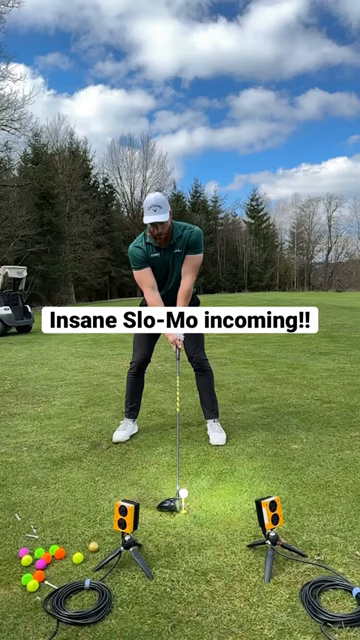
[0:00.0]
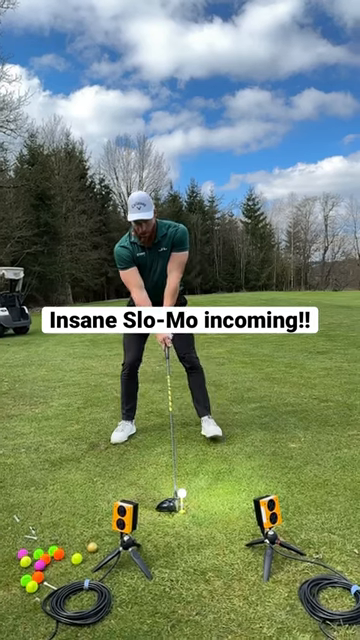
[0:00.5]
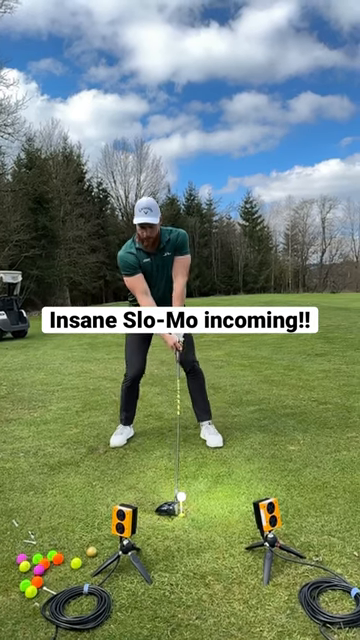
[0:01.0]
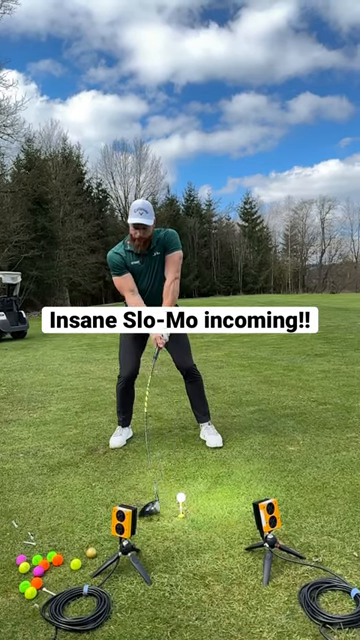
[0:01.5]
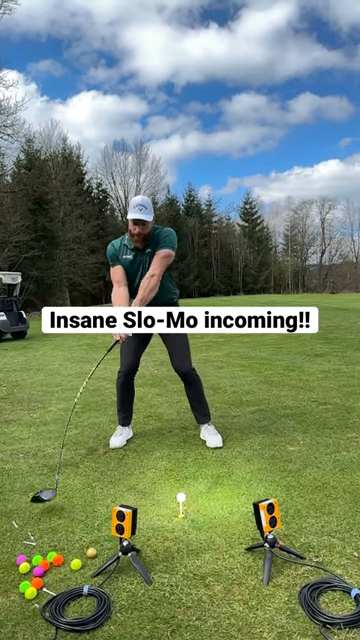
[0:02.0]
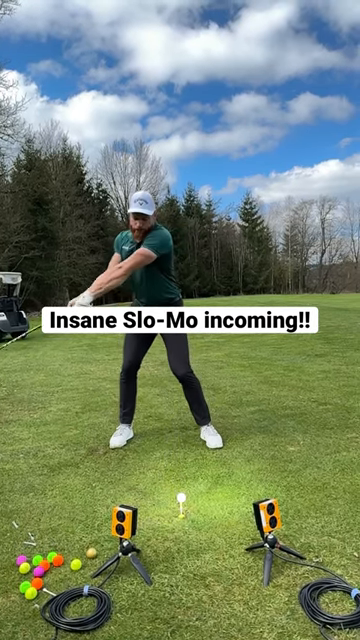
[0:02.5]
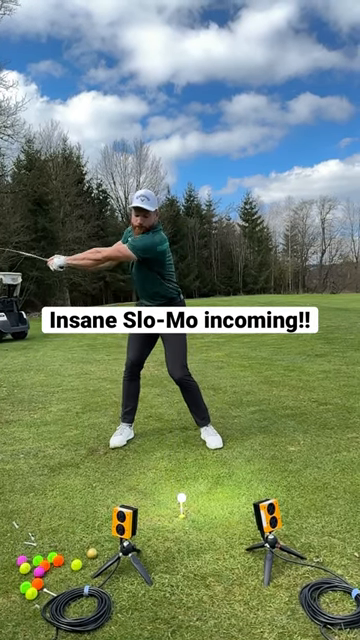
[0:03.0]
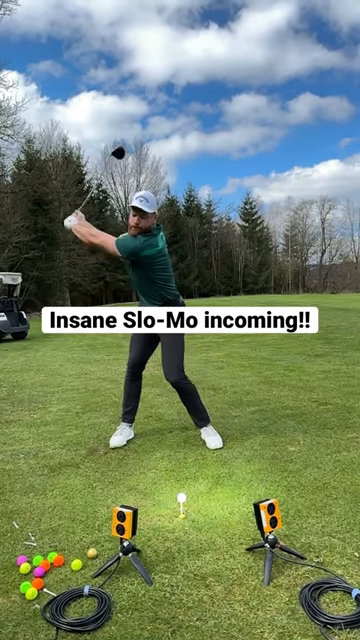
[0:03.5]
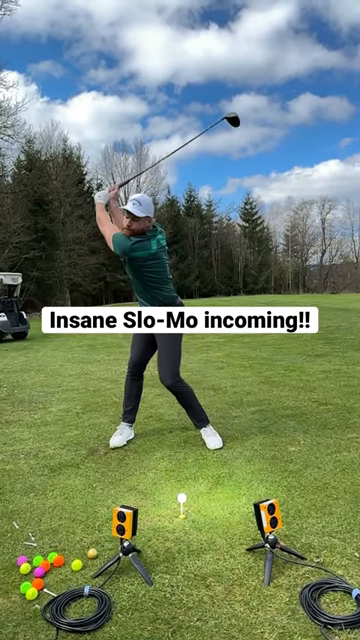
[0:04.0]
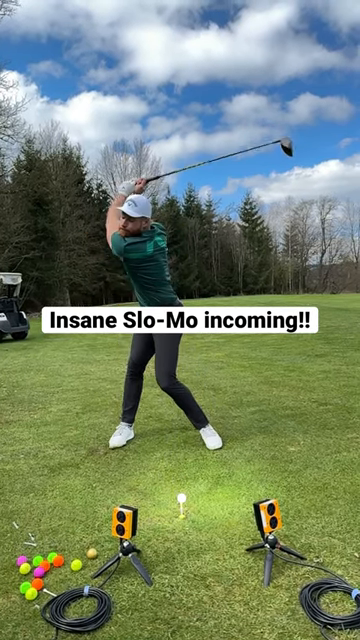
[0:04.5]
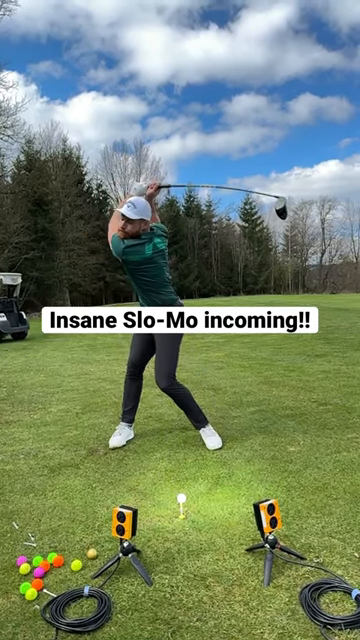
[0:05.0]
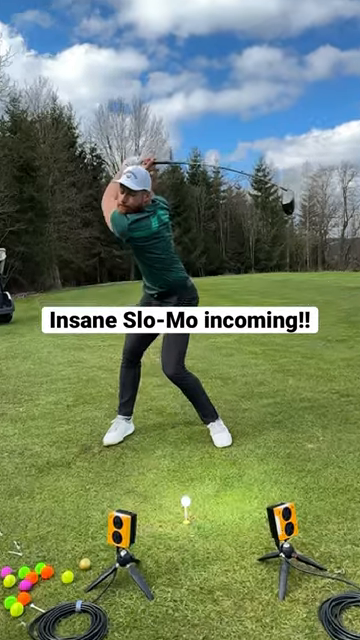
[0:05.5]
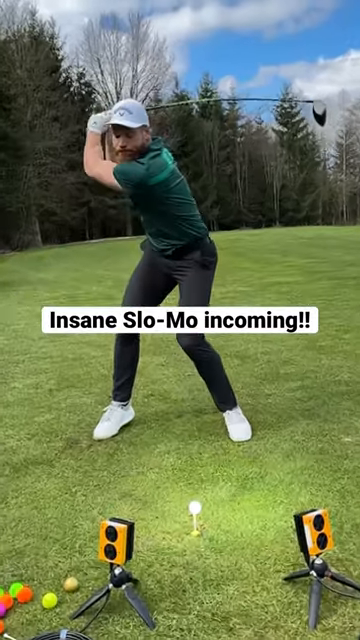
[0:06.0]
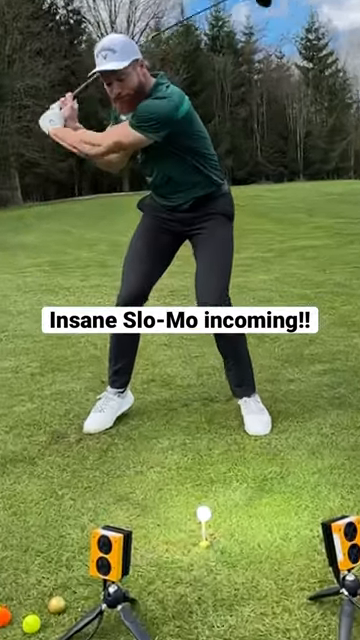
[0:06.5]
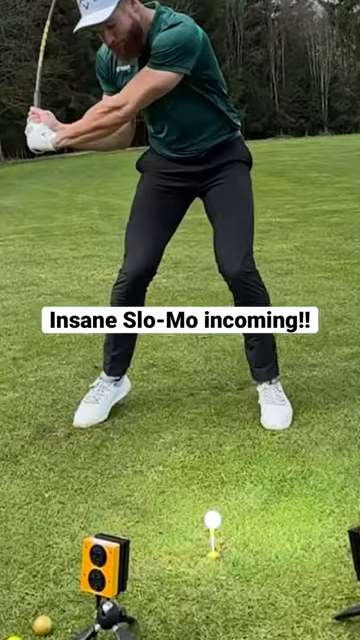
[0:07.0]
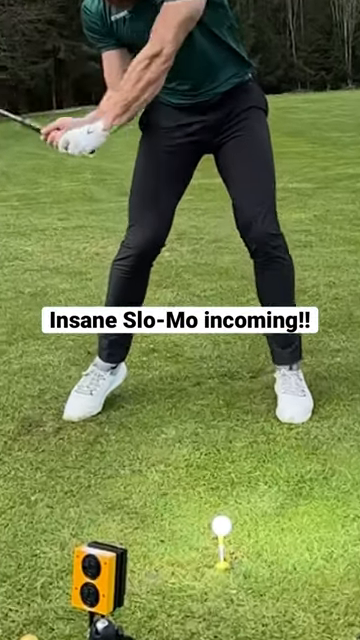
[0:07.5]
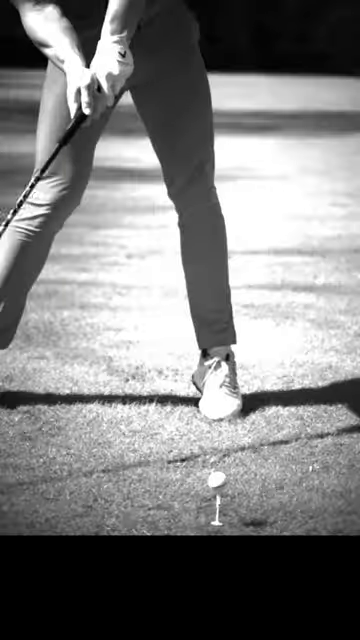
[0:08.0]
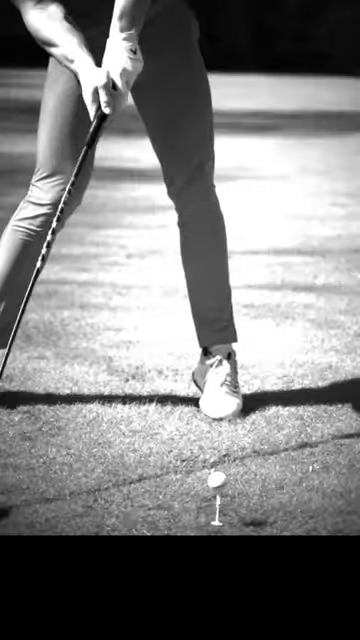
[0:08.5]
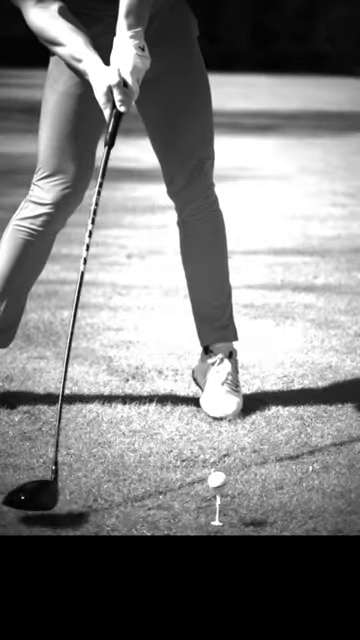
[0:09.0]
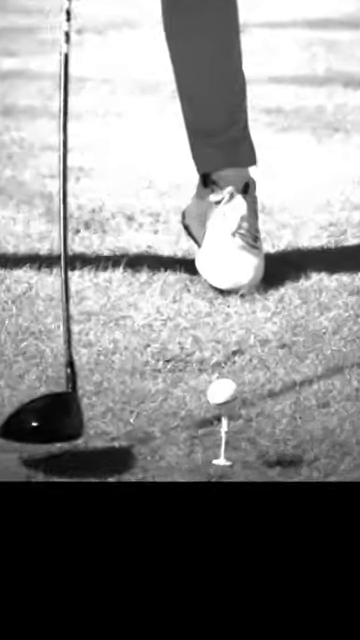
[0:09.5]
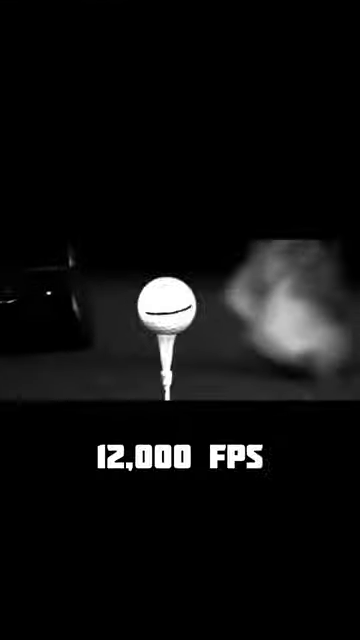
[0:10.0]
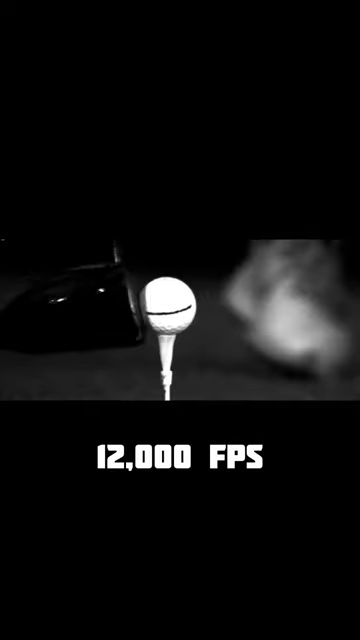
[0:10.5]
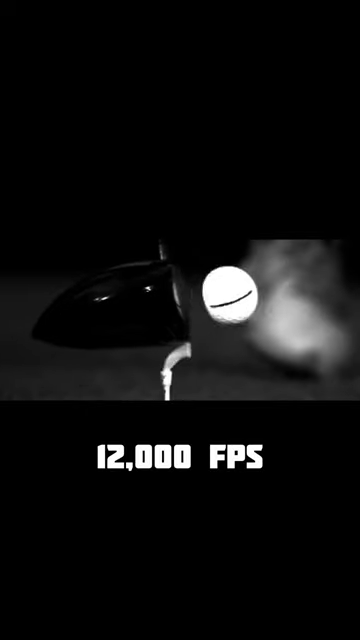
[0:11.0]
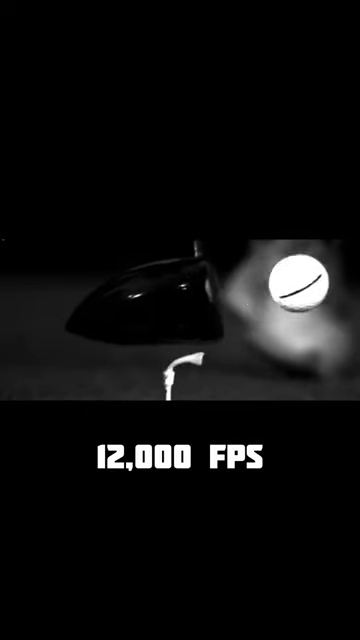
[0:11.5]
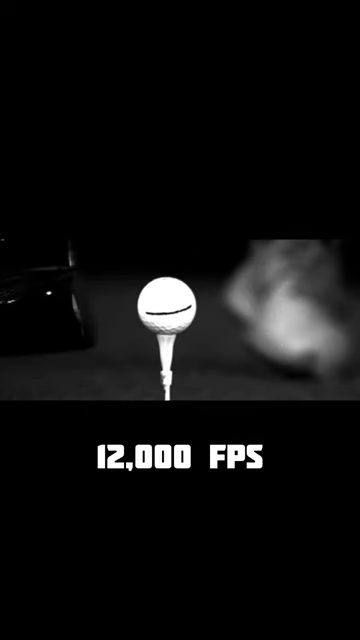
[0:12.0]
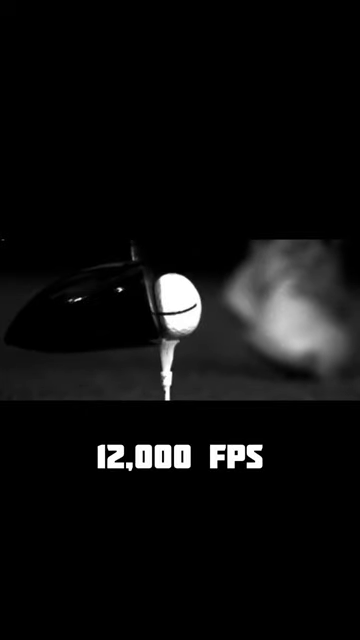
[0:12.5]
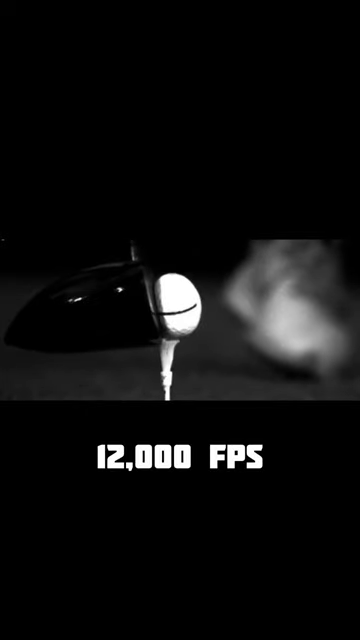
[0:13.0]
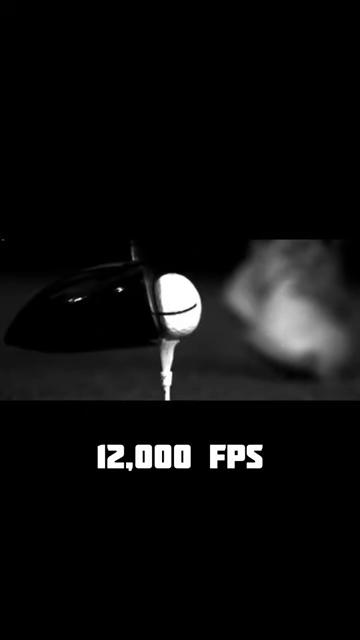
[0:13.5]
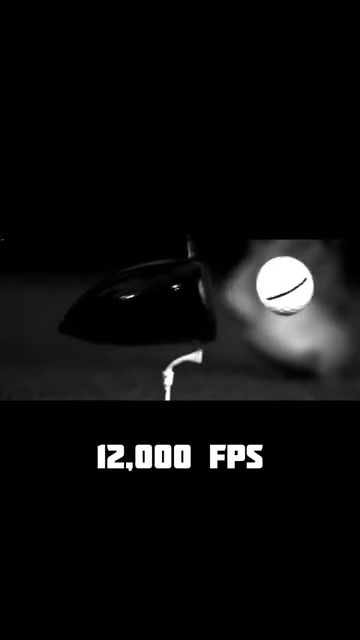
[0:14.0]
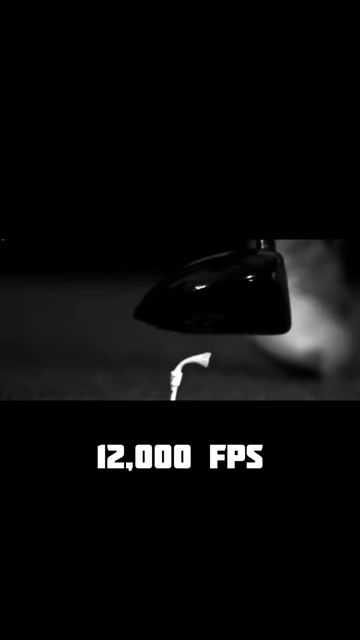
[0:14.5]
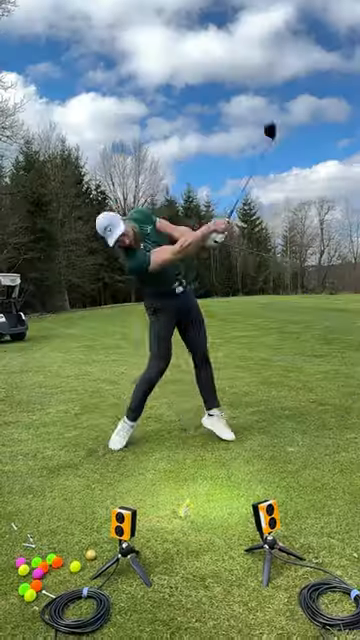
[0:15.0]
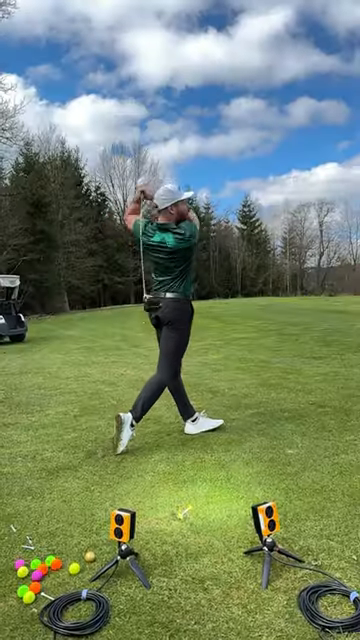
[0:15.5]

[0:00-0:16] A person stands on a golf course, on very light-colored green turf, shown in slow motion. Words at the bottom or middle of the screen say "insane slow-mo coming." The person, holding a golf club, swings, and the club hits the ball in very, very slow motion. The shot then zooms in to show just the ball being hit by the golf club in black and white, with "12,000 FPS" underneath. The footage kind of plays back and forth as if rewound for a moment, then continues forward. The exact same shot of the person hitting the golf ball follows, but much more sped up, maybe in actual time, though it looks sped up even faster than that. He swings, hits the ball, and the golf club goes over his head. Behind him are pine trees and a blue sky with clouds, and some equipment is set up around the golf tee.